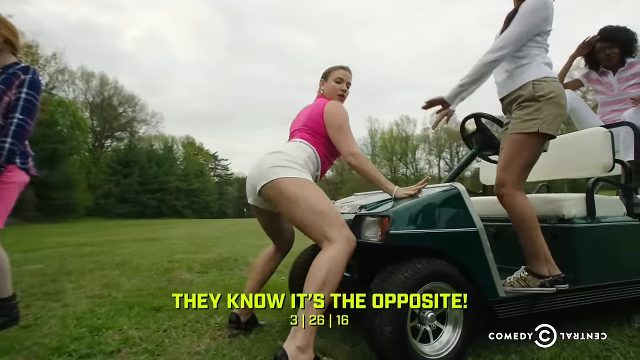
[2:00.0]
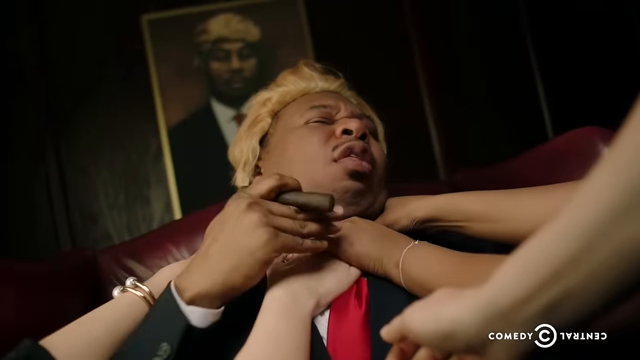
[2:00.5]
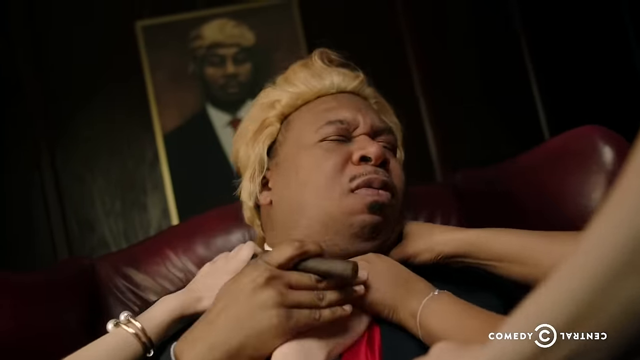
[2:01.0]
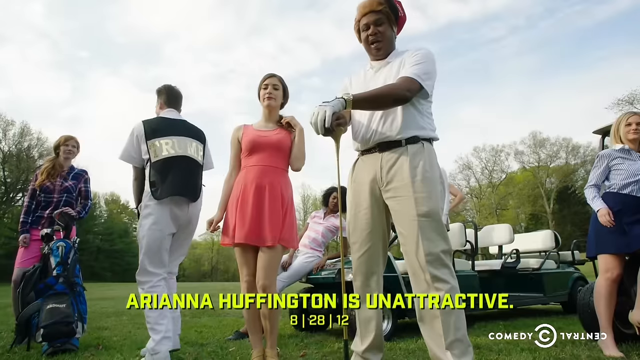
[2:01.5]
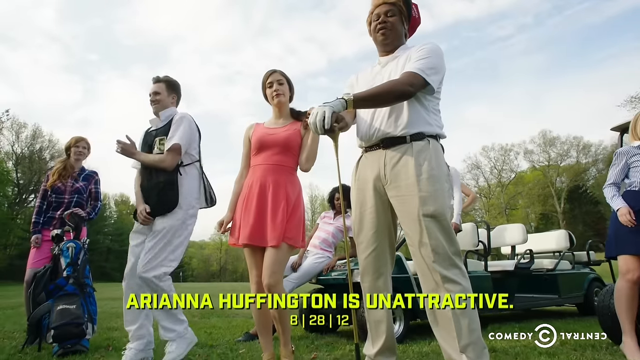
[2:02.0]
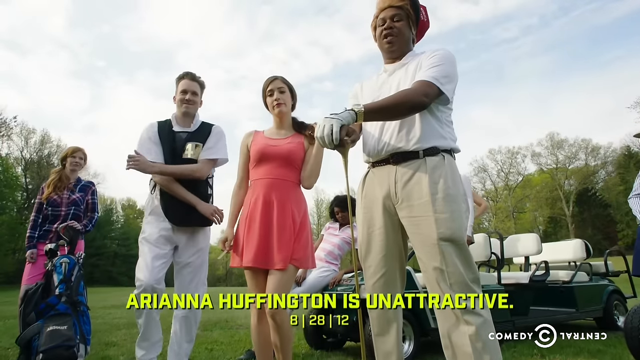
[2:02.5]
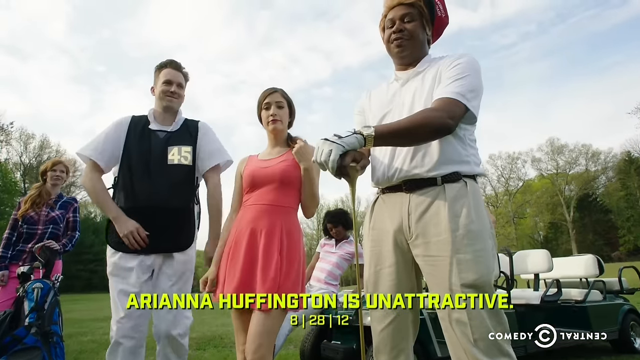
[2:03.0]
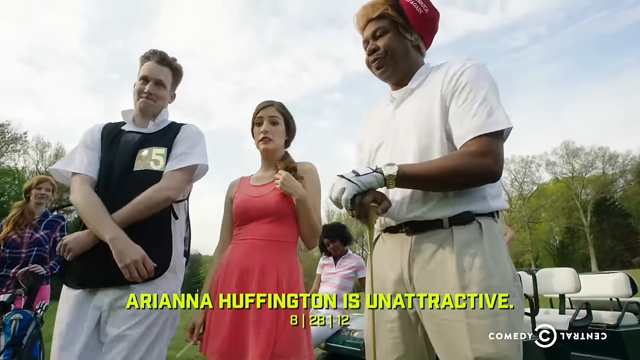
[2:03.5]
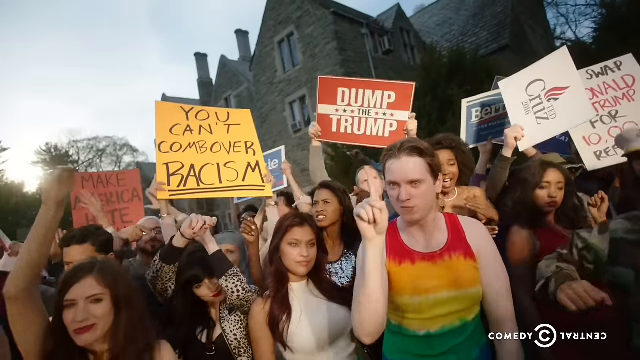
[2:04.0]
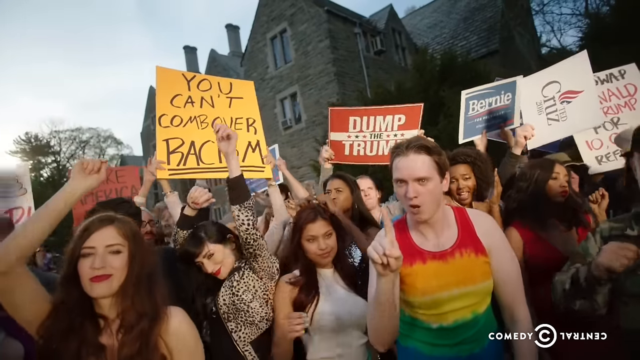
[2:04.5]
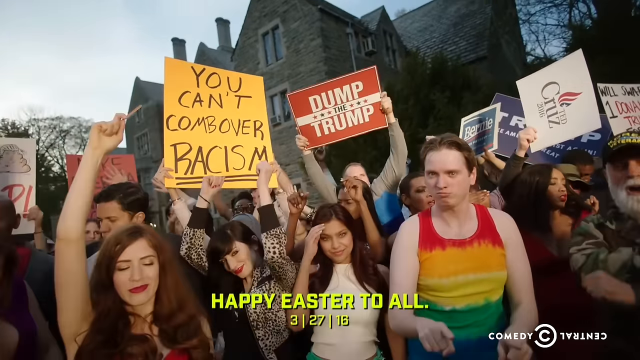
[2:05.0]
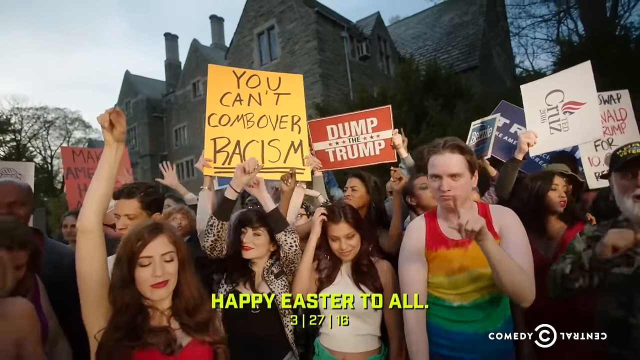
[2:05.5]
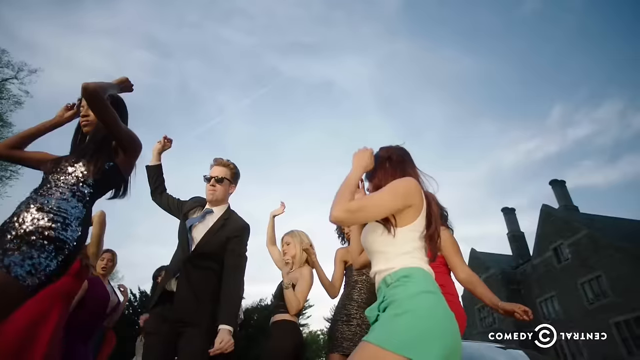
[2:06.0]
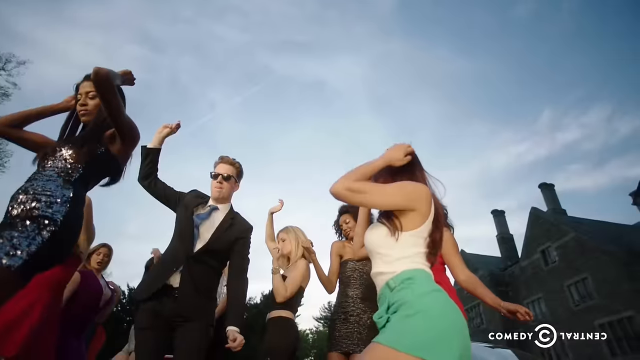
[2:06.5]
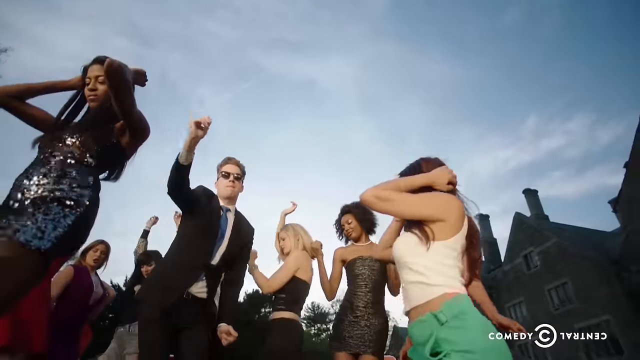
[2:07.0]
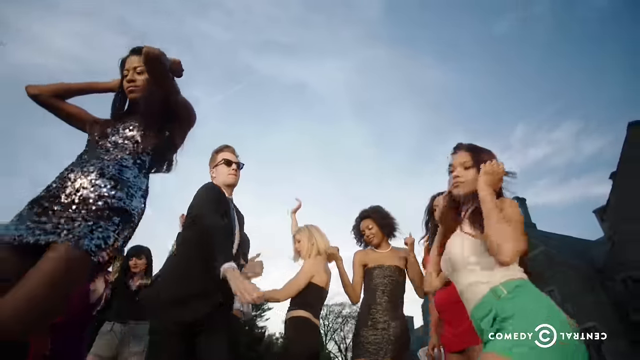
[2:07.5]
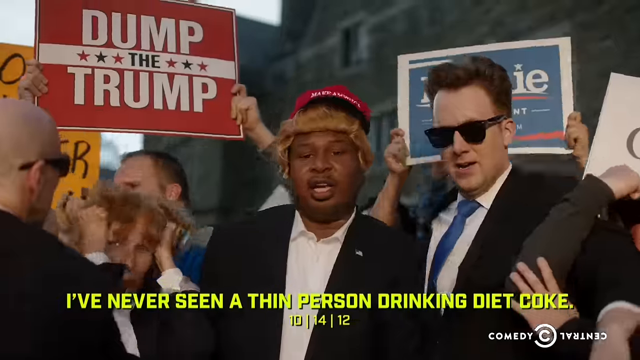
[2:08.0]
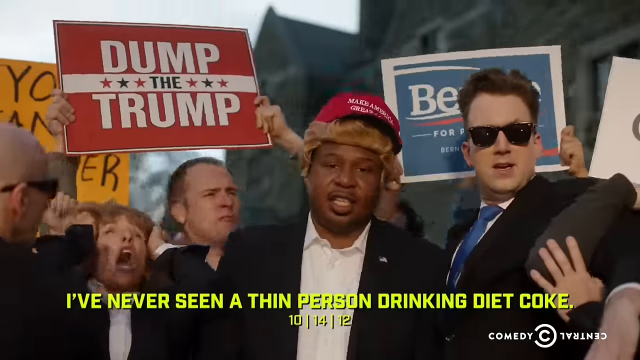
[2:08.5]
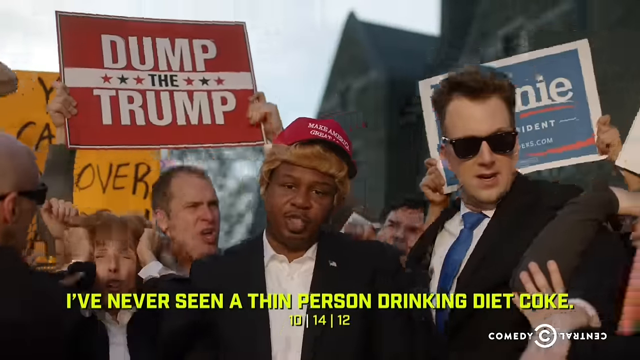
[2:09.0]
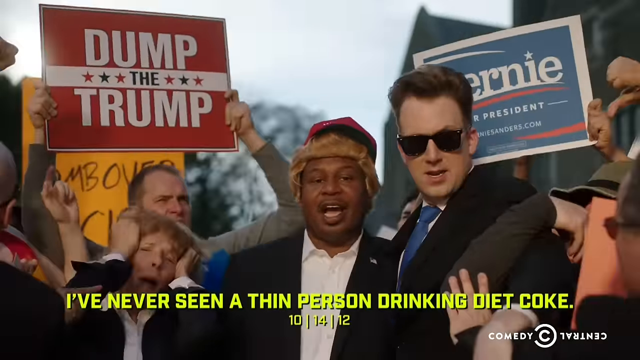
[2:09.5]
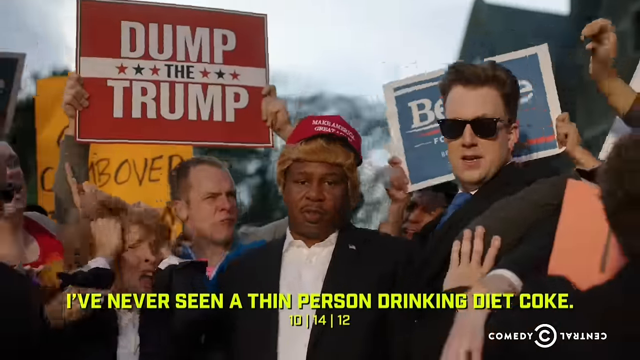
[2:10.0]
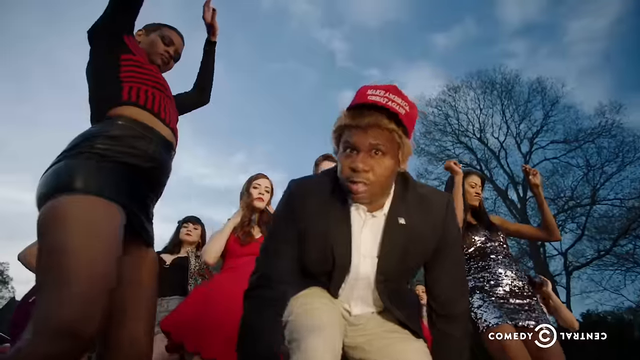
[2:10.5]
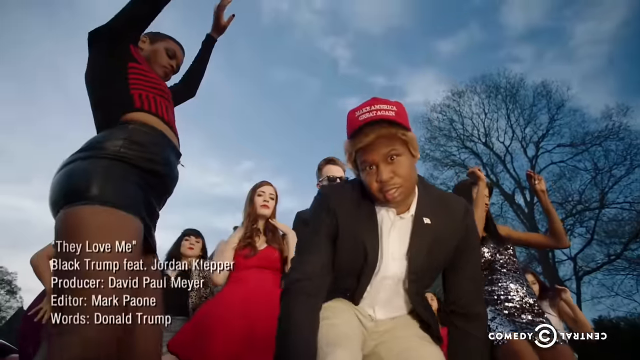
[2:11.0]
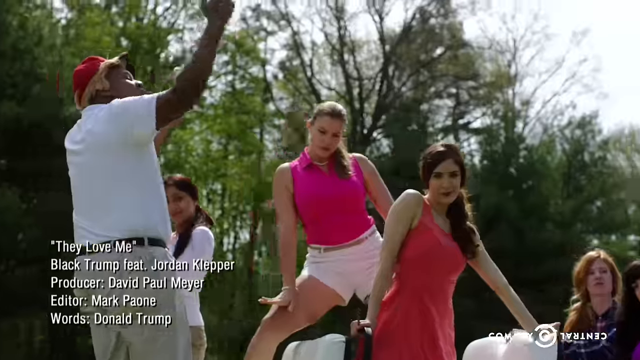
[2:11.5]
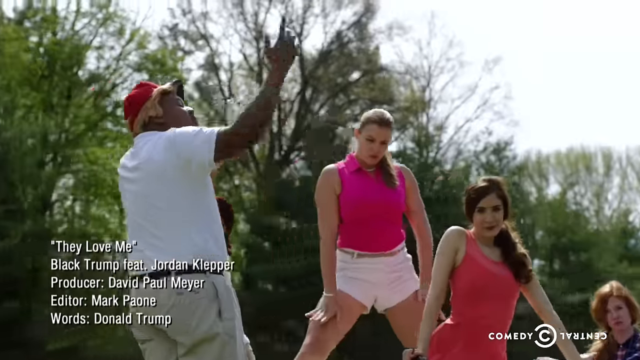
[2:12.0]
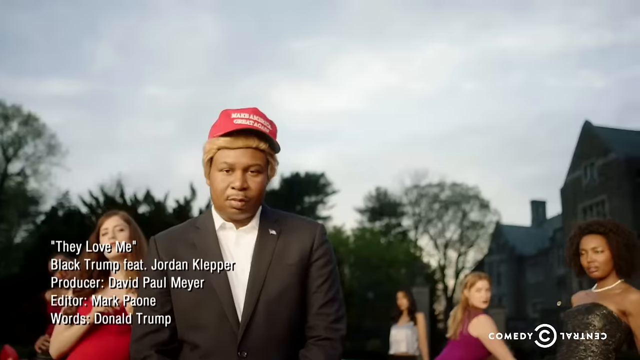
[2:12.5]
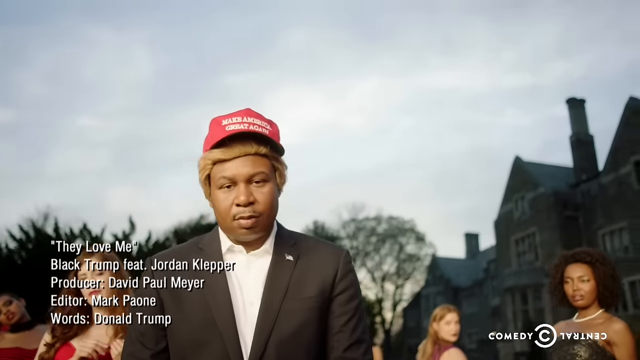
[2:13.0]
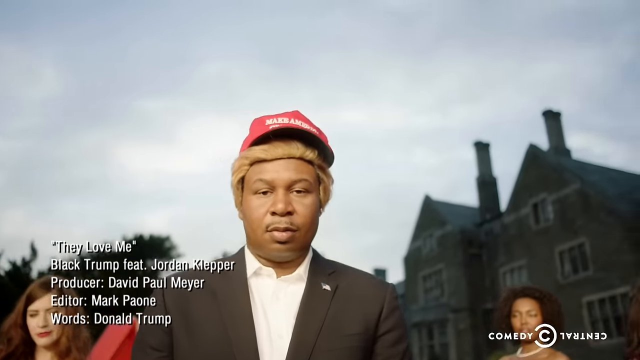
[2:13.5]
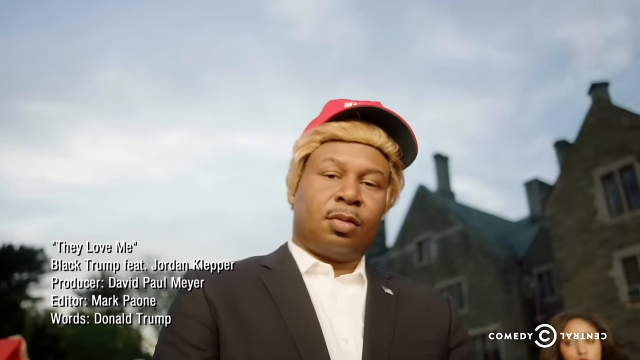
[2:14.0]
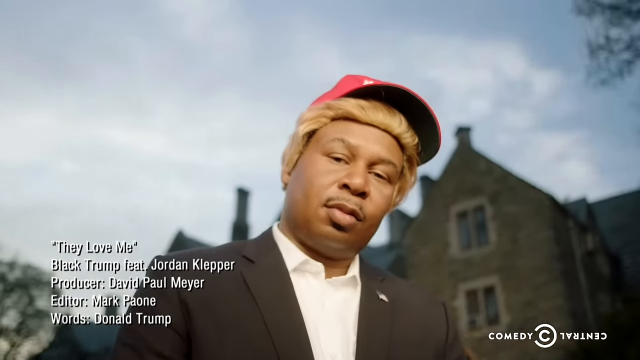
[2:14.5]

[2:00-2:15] Hands in several skin tones, brown, white and black, start to choke Donald Trump as he sits. He taps on the hands as his eyes close and his mouth opens as he tries to breathe. In the next scene, Donald Trump rests on a golf club with both palms on top of it. He appears to wear long khaki pants with a black belt, with his white polo shirt tucked in. His caddy appears to just be dancing, wearing all-white pants and a white shirt with a black bib. Several women continue to dance, and one woman appears to be sitting on top of the golf cart. The crowd of protesters is still waving their signs across the scene; several appear to be making distasteful faces, and some are dancing with the crowd. Donald Trump is then back in the middle of the crowd, continuing to sing.